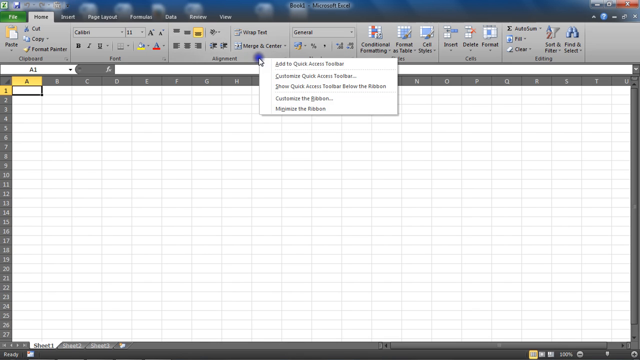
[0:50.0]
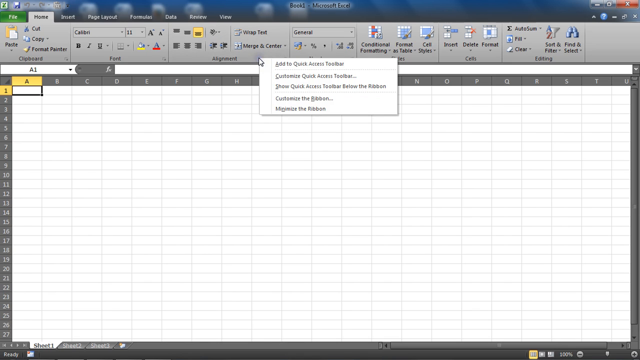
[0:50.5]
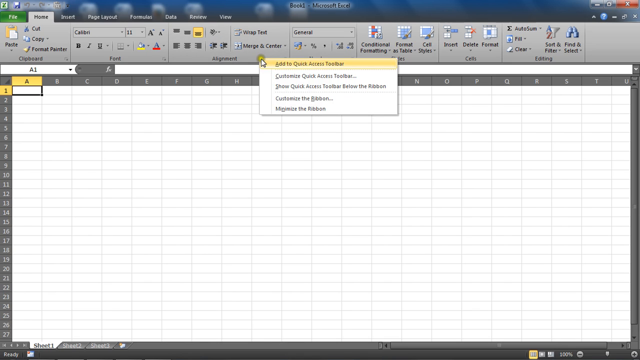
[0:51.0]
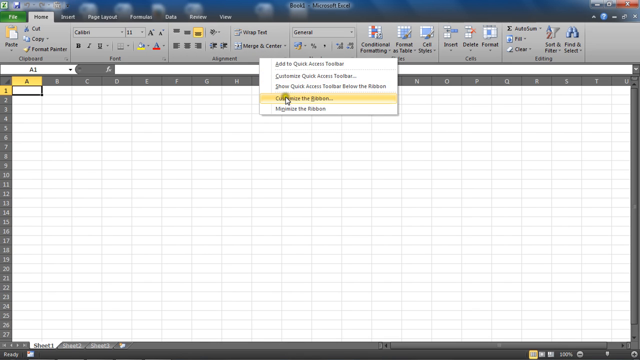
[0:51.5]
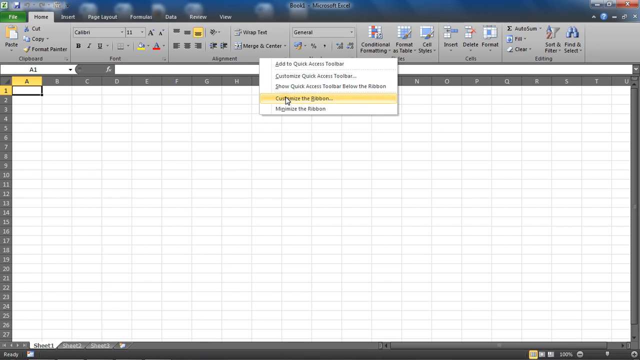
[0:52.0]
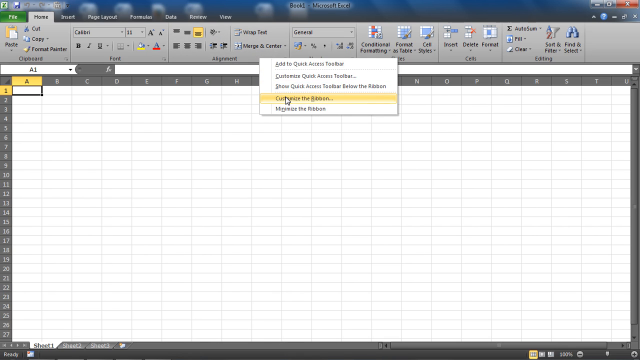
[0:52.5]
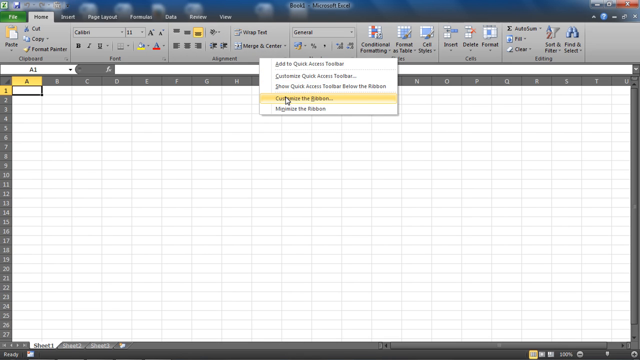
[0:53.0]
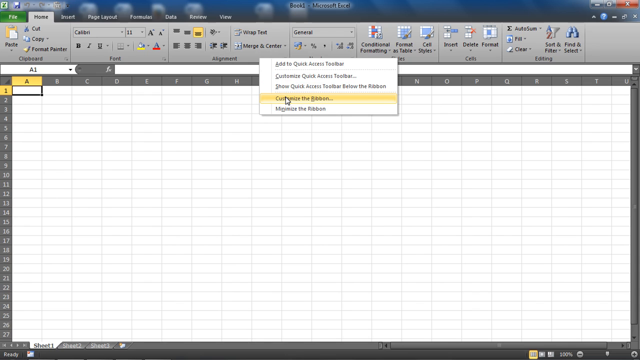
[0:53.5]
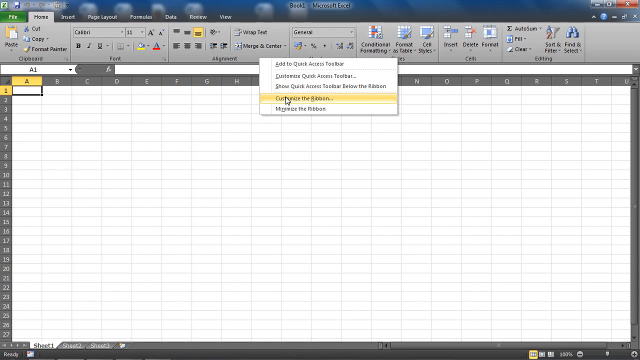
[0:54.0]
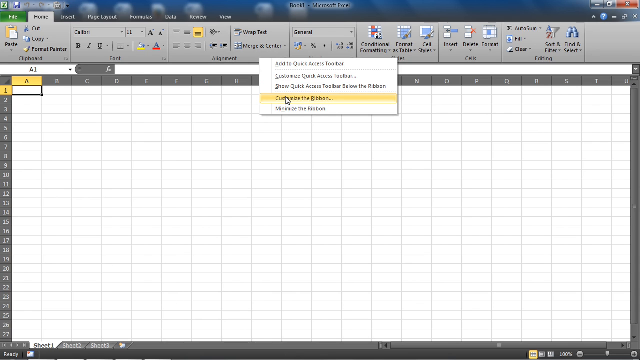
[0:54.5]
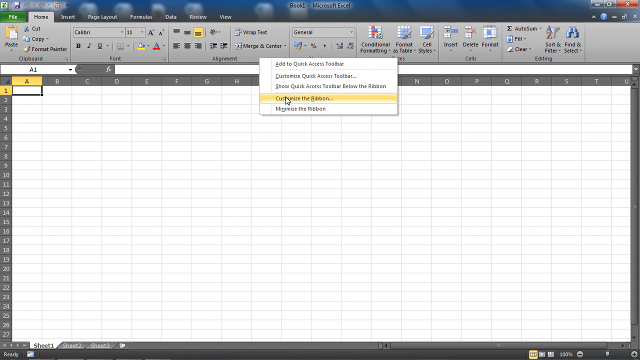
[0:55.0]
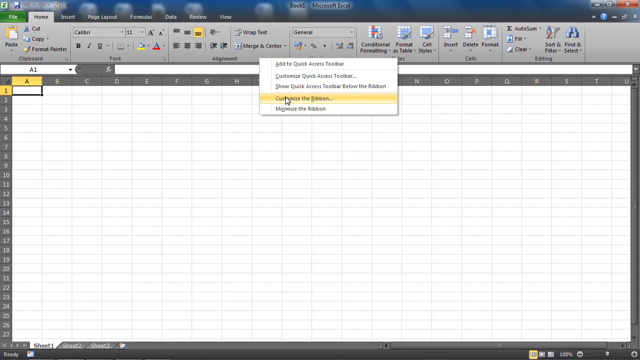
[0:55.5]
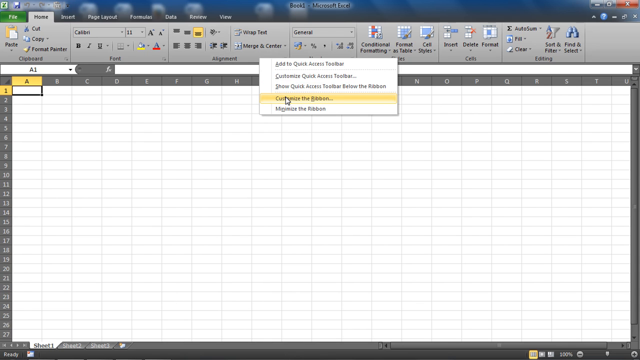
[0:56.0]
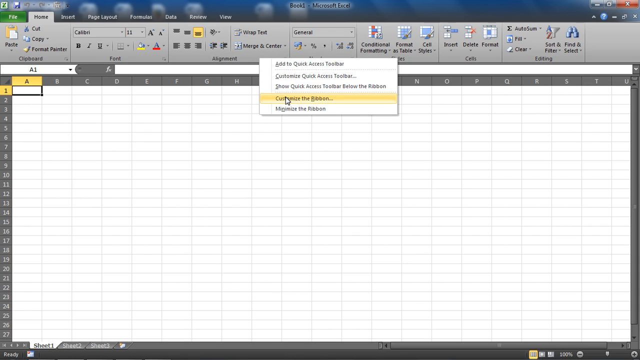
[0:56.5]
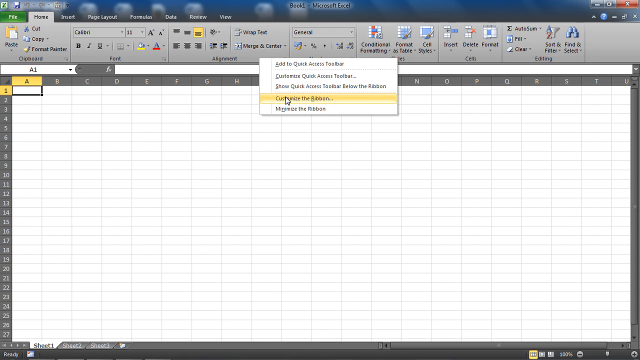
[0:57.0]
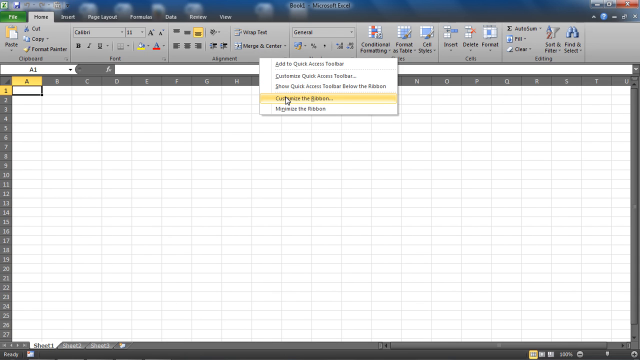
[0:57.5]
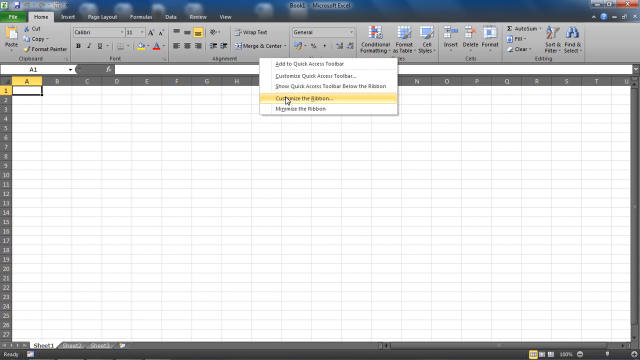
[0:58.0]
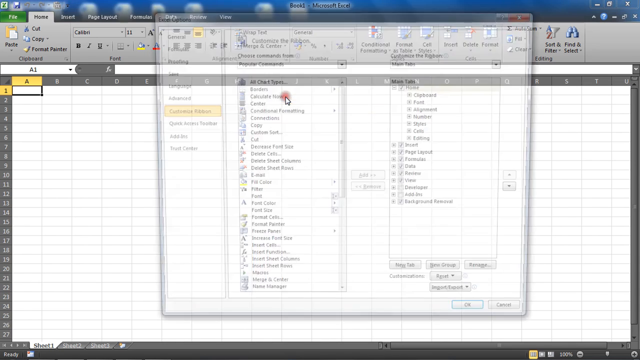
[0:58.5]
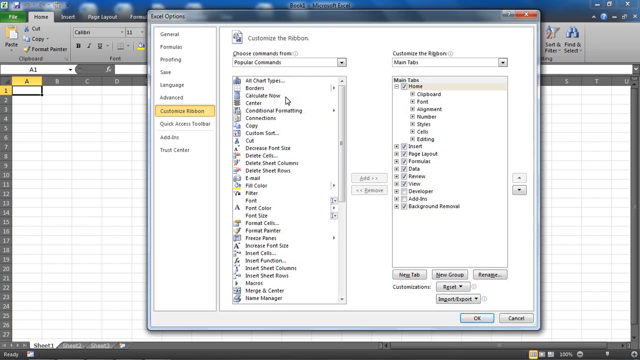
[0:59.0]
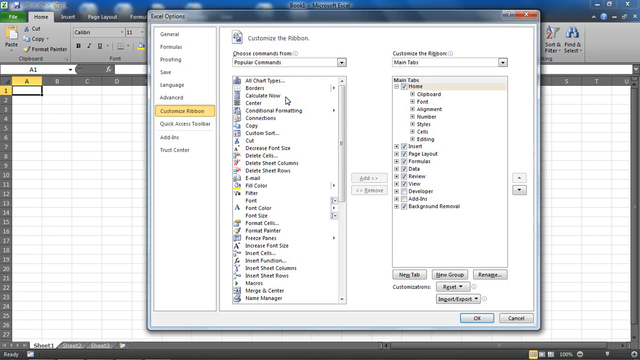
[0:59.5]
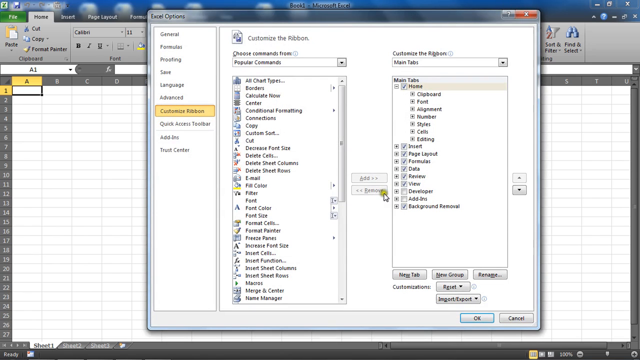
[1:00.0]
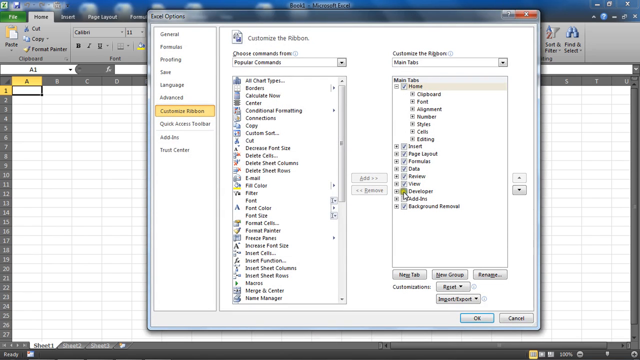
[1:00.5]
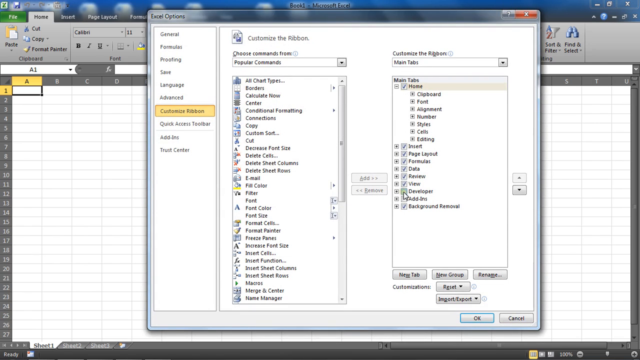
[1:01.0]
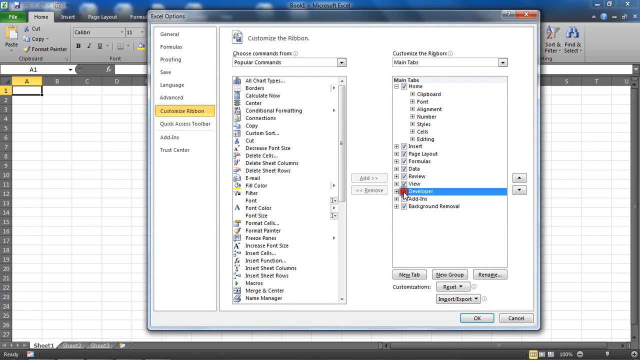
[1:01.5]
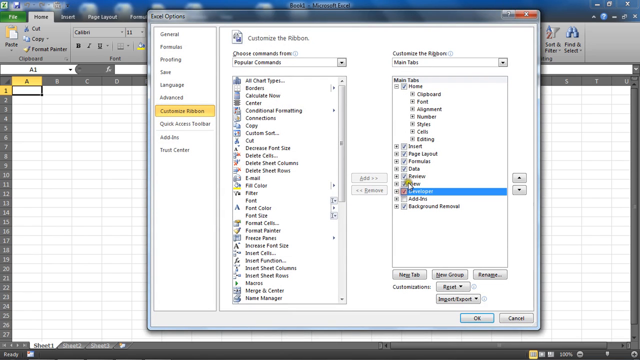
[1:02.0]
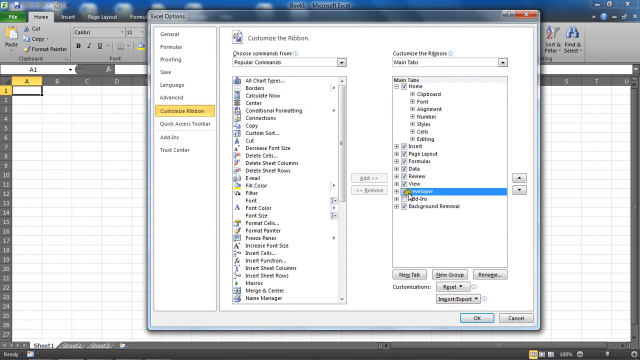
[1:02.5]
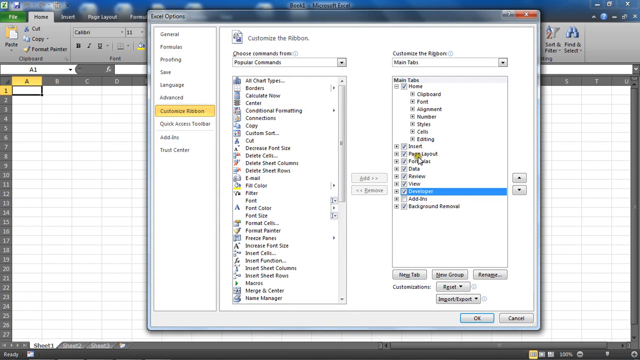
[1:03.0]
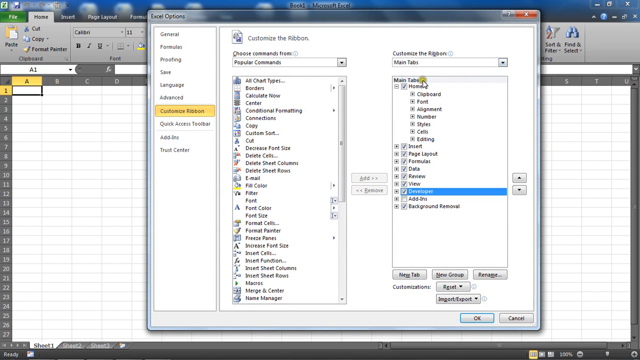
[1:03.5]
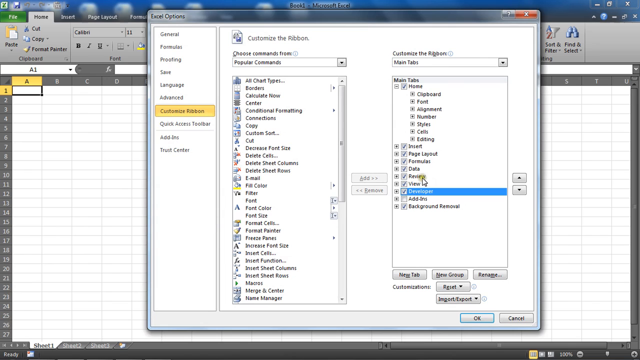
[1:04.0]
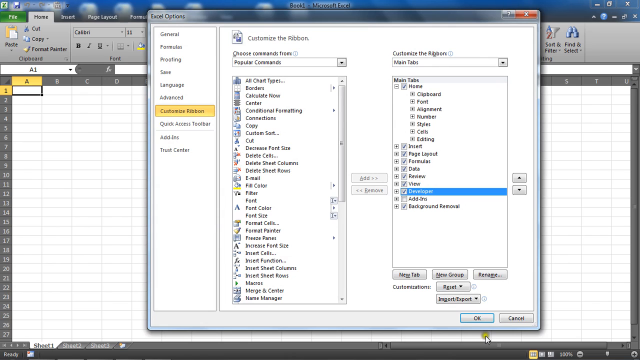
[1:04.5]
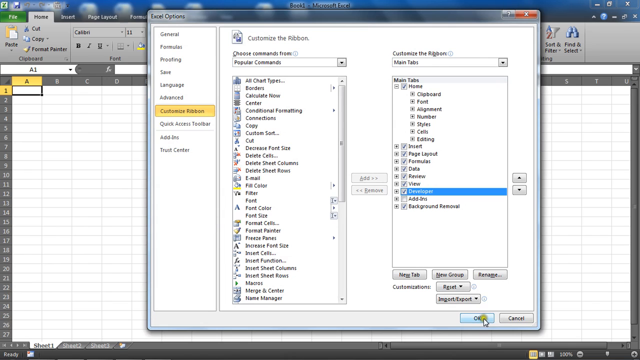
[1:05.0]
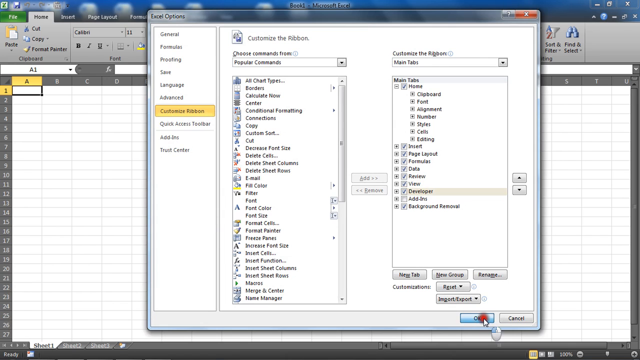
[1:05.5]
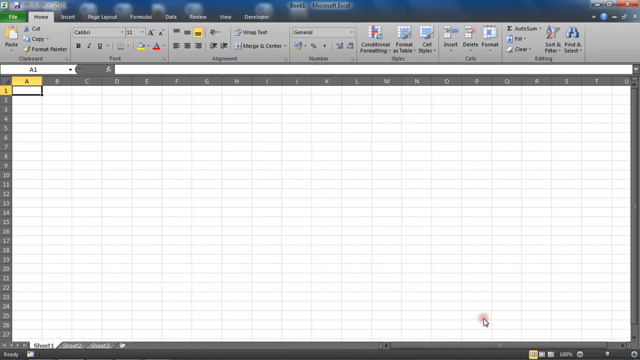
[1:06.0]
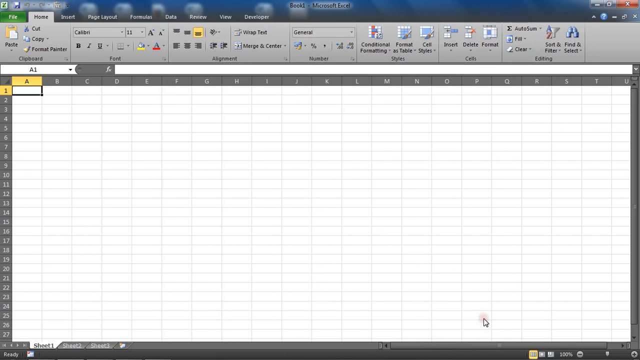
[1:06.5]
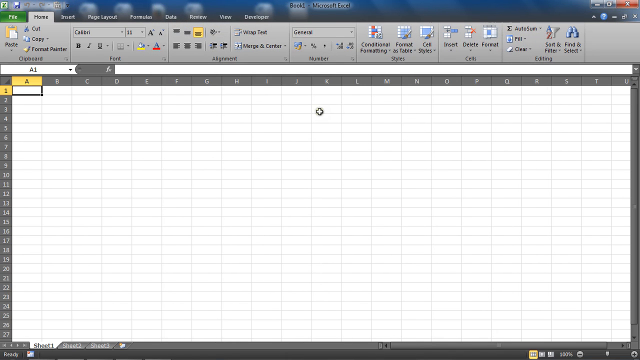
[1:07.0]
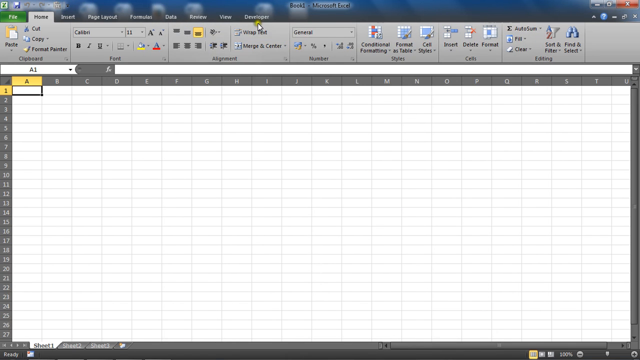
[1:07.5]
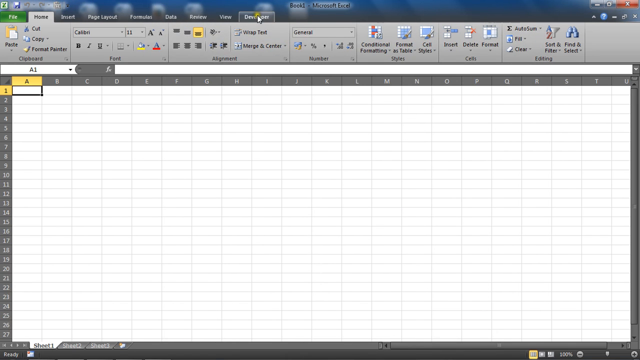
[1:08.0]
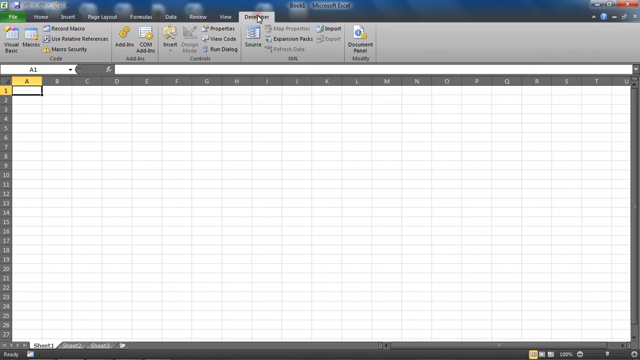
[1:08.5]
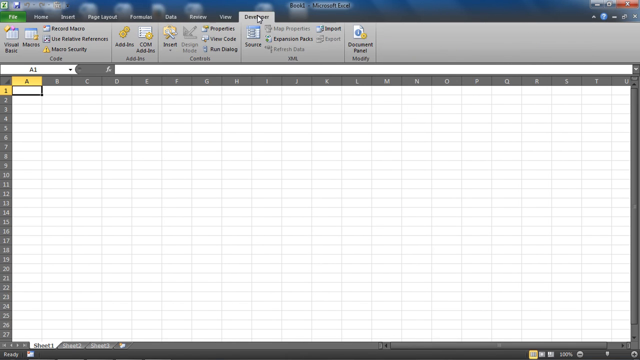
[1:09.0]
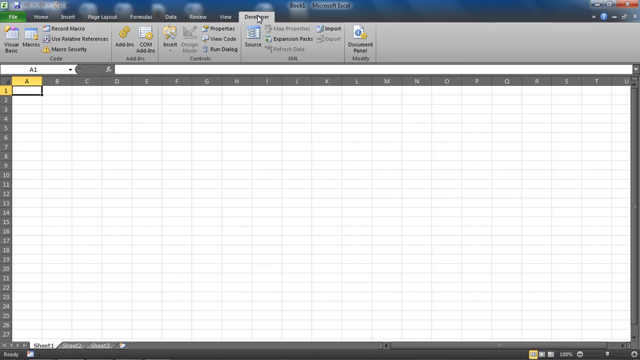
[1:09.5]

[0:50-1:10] A small window opens with five choices in small black text on a white background. The top one says something like "Add to Quick Access Toolbar", the next says "Customize Quick Access Toolbar", and the last apparently says "Maximize the Ribbon". The top choice is highlighted yellow where the arrow cursor rests. The cursor pulls down to the fourth choice, apparently "Customize the Ribbon", which turns yellow, and pauses on it. It apparently presses it: a dark red circle appears for a fraction of a second, and a big window opens with "Excel Options" in the upper left. A panel below lists about 10 choices, with "Customize Ribbon" highlighted in kind of an orange-yellow. To its right are two really large fields full of selections, with scroll bars. The cursor hovers, moves to the right panel, where many items are check-marked, and unchecks one; the second one from the bottom, maybe "Add-ins", is now unchecked. The cursor then goes down, heads back up to the top of the screen, and clicks a different tab, which changes the entire toolbar so that it no longer shows options like font or alignment; the tab name cannot be read.